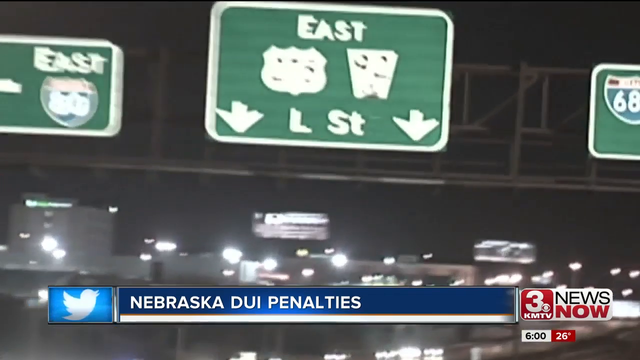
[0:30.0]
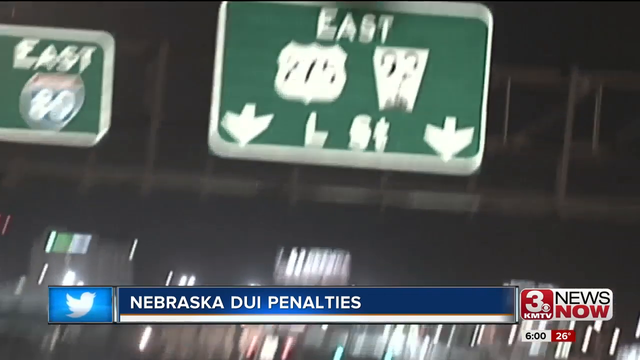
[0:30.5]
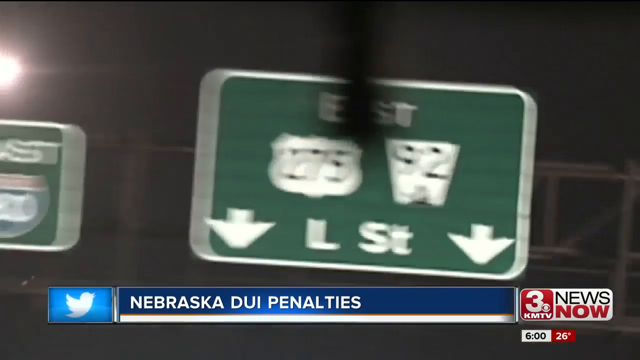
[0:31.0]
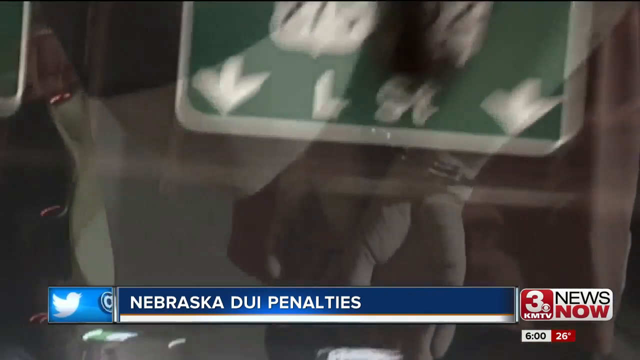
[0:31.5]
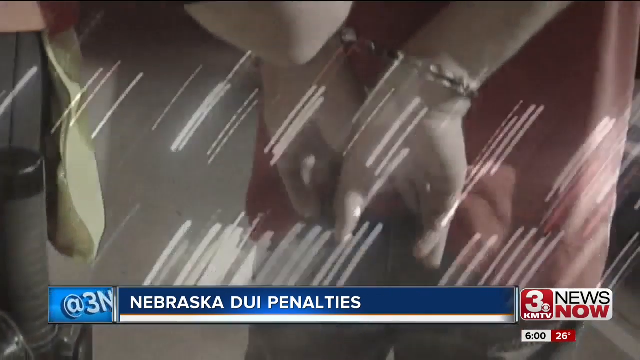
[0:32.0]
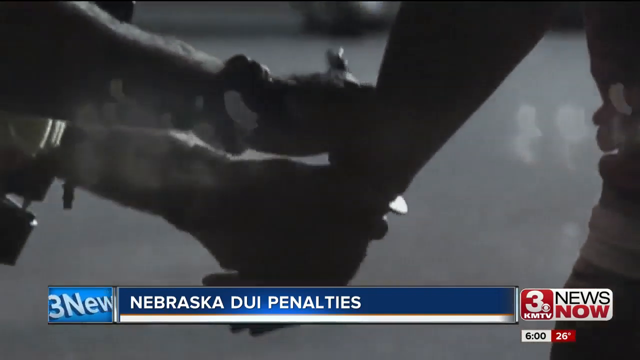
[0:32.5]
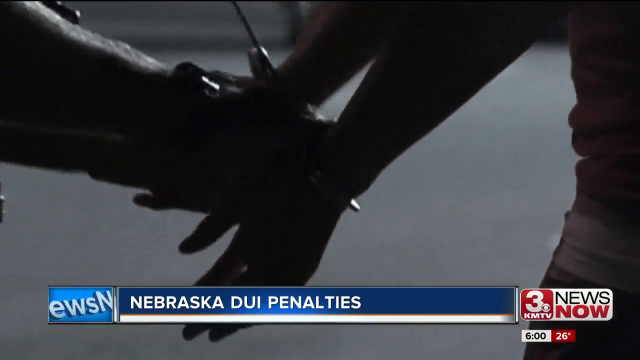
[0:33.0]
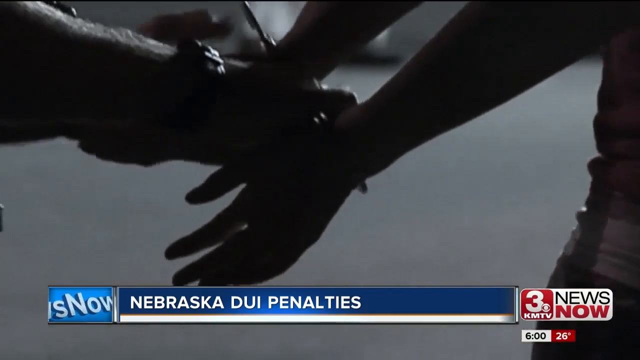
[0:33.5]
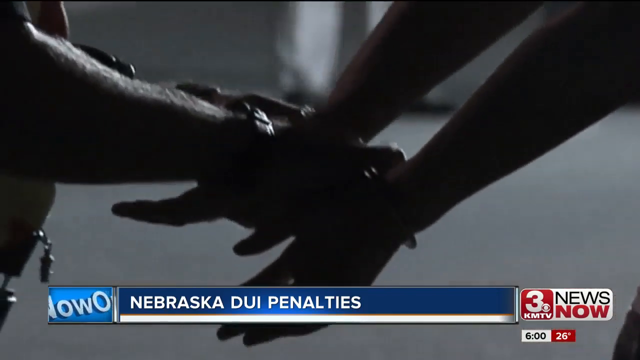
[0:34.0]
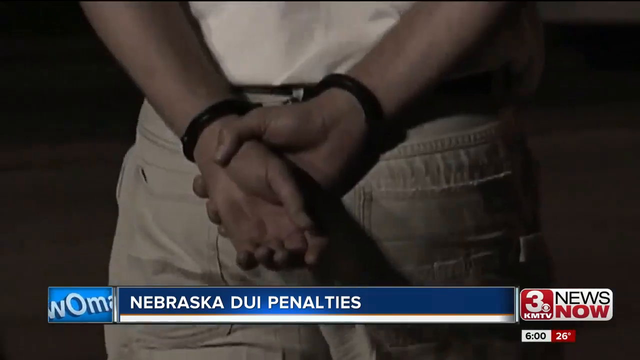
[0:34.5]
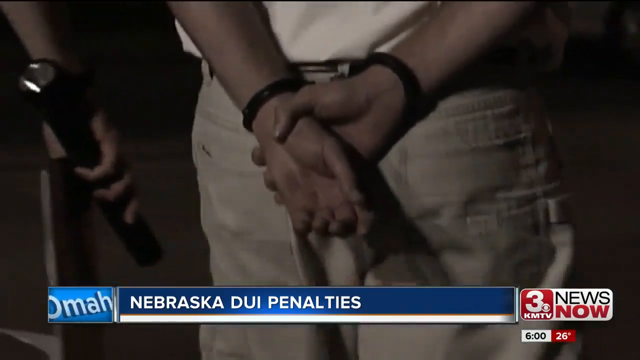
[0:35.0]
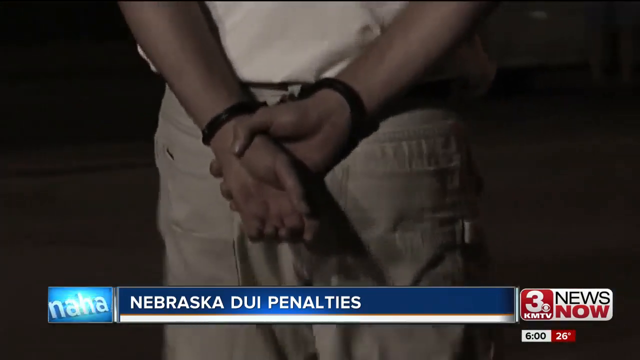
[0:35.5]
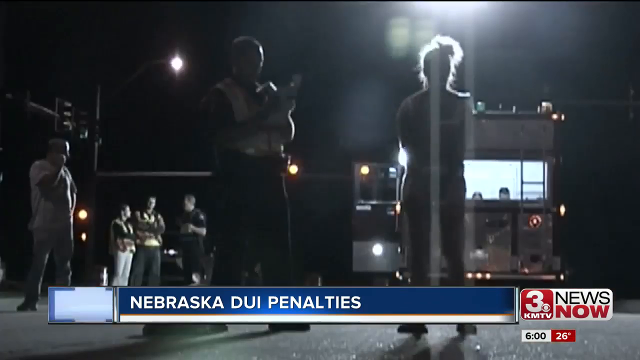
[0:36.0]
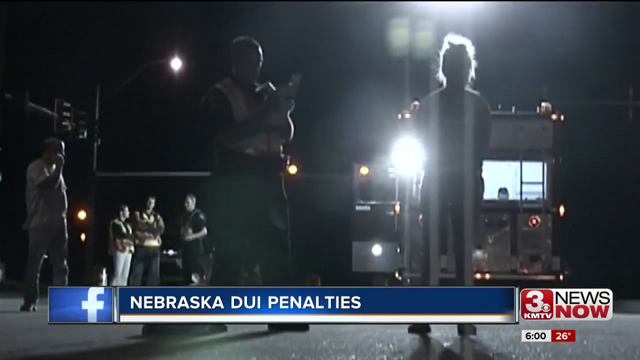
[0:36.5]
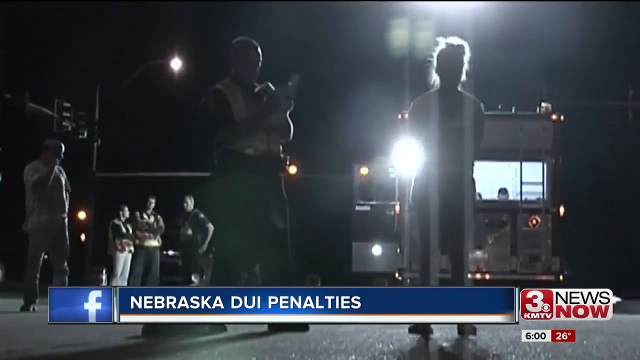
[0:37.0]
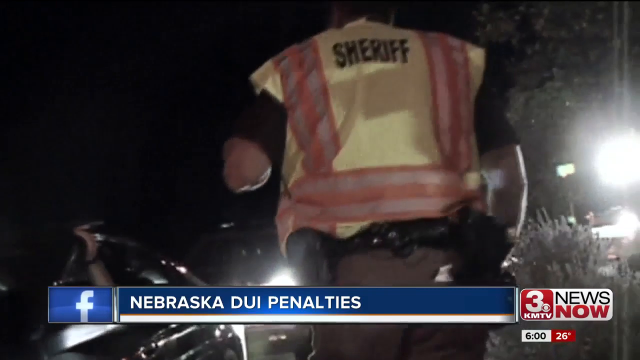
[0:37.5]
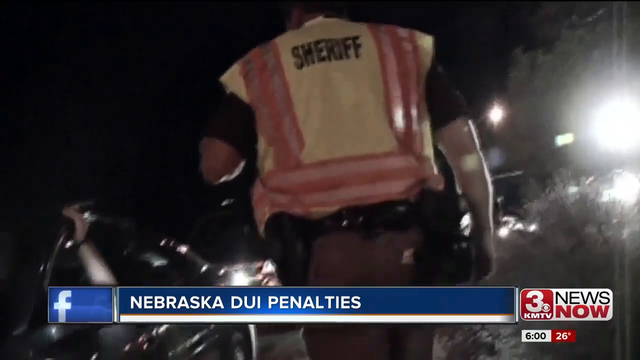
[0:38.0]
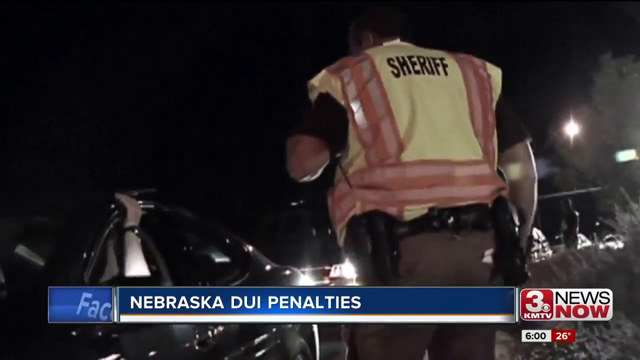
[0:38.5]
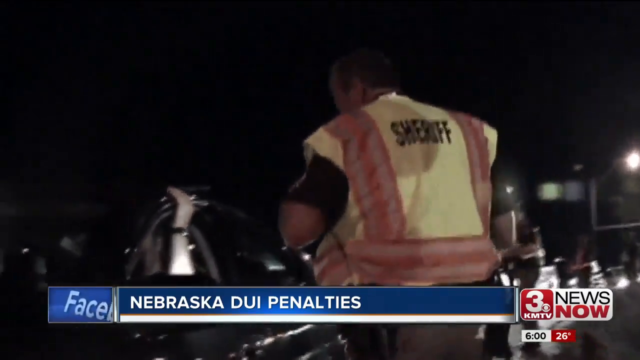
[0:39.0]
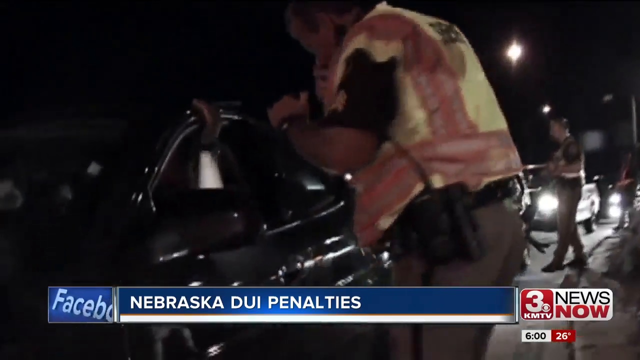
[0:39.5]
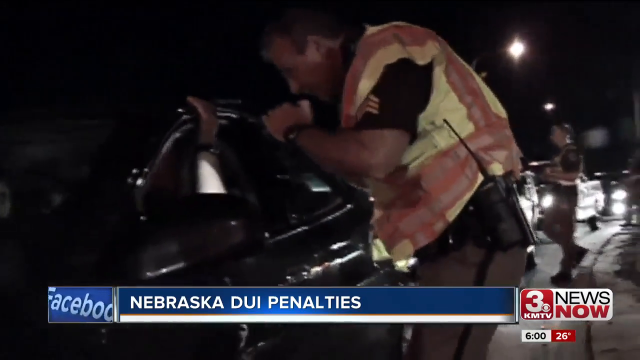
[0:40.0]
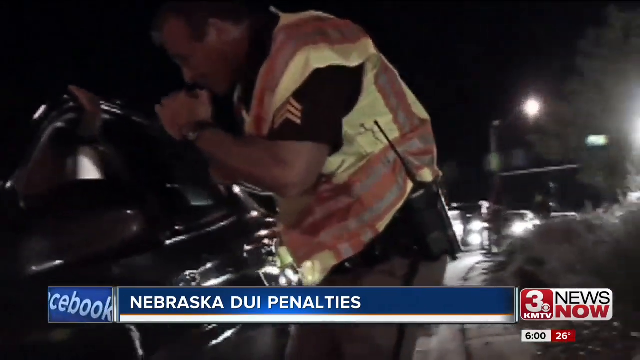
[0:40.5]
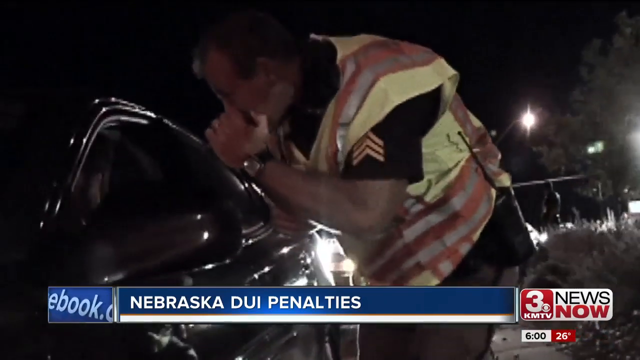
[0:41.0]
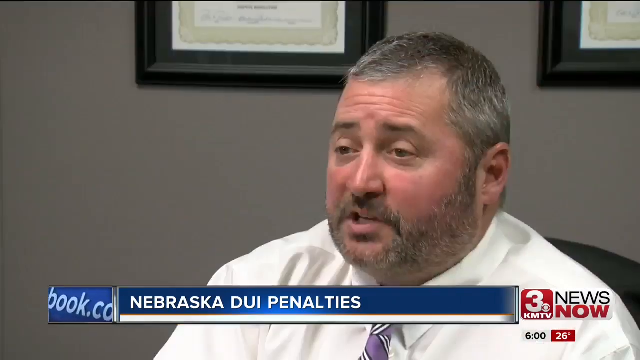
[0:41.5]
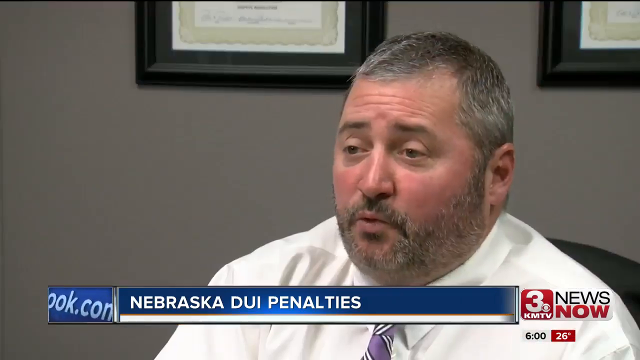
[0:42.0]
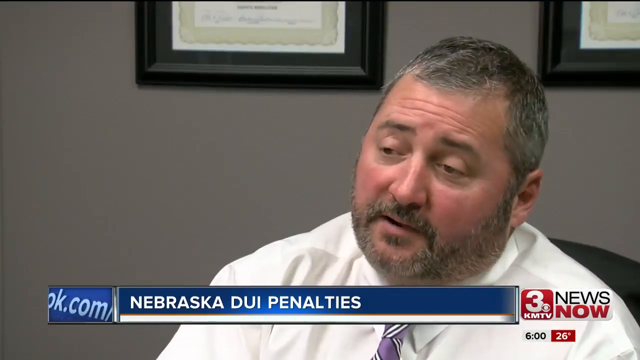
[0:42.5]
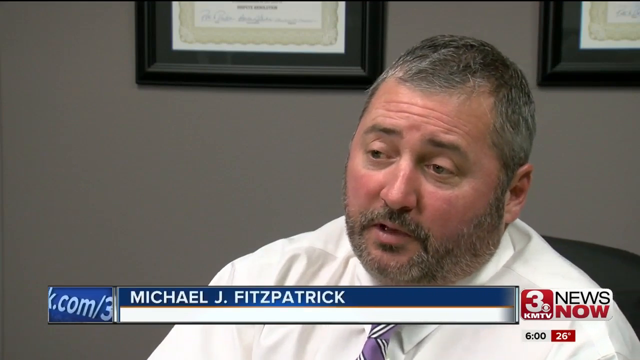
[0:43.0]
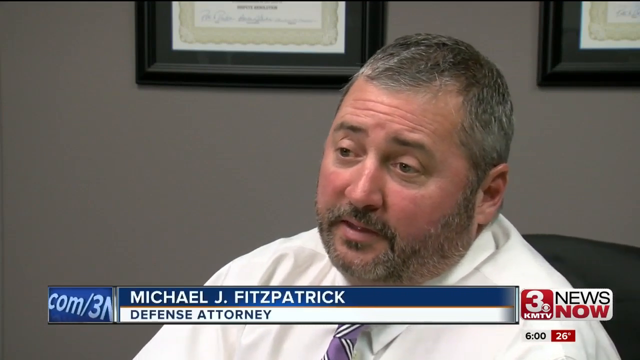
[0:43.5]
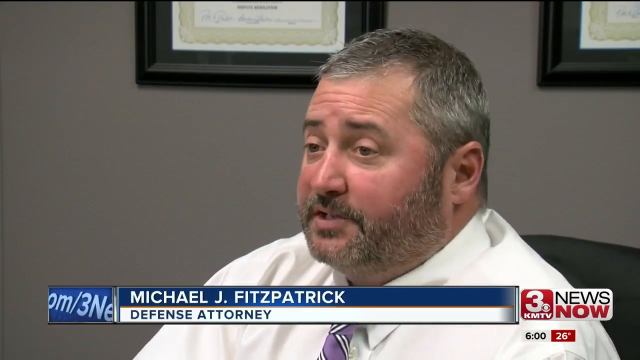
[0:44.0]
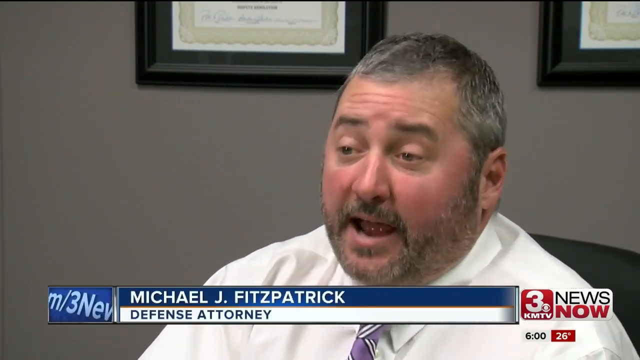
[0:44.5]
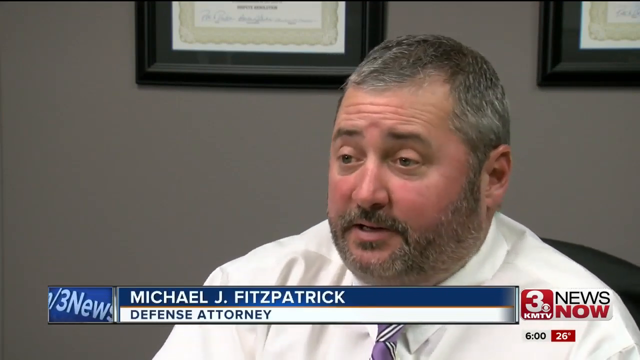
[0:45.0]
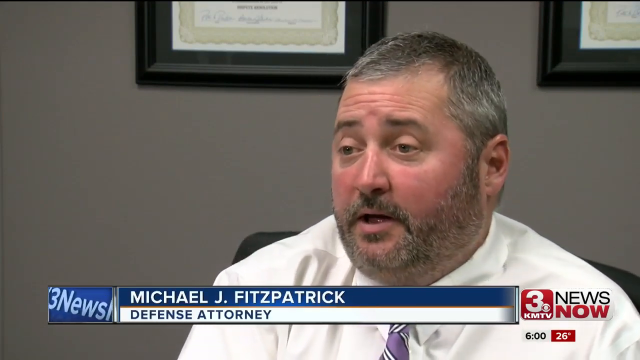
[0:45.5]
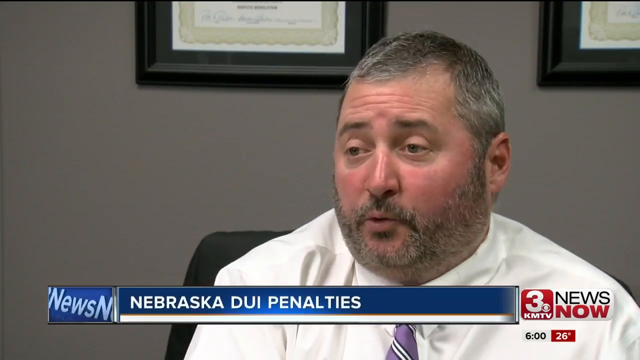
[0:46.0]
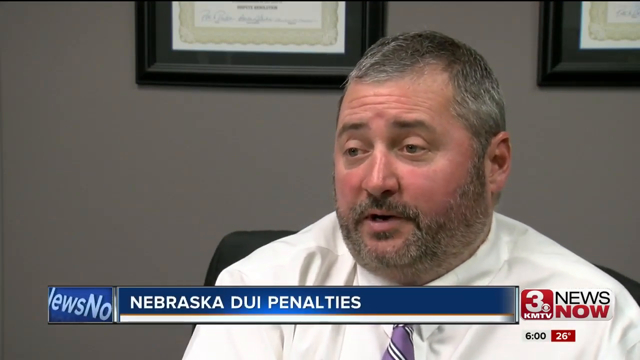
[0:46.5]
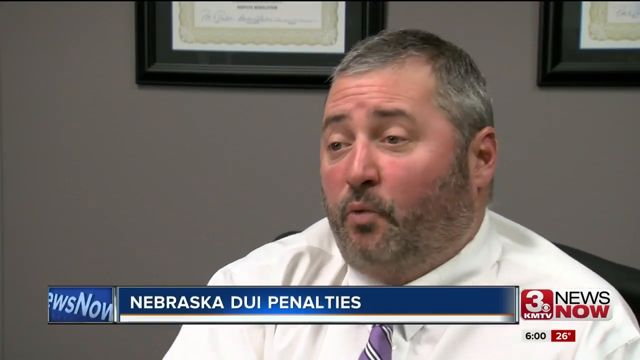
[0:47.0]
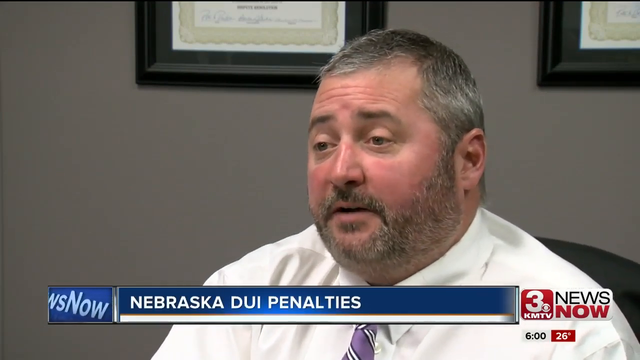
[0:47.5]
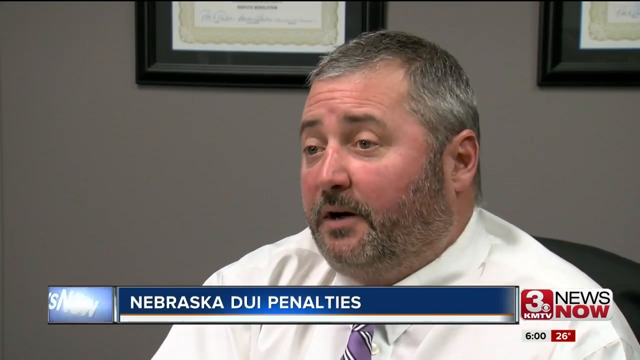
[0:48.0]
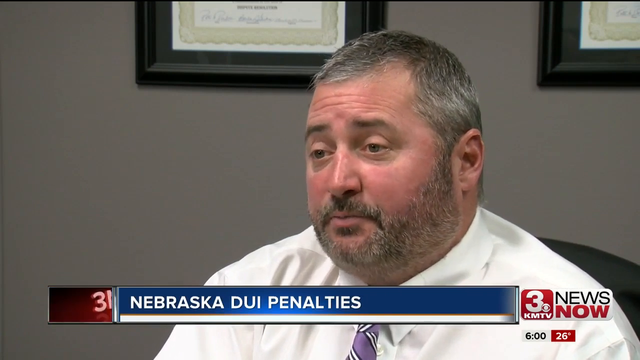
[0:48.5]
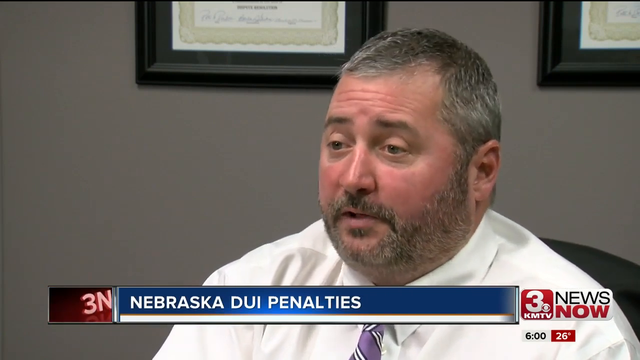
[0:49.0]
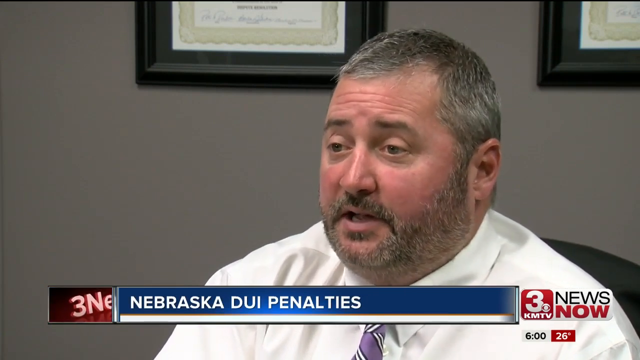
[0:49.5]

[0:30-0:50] The car passes under the "Eastwoods" signpost, and the report moves to what appears to be a stock image of police arresting someone. Handcuffs are being put on, and a key hangs from the policeman's belt. A close-up shows a man handcuffed with his hands behind his back; he wears a white t-shirt and beige chinos, and the handcuffs are black. A policeman briefly walks next to him. Next is a roadside at night, where apparently either an ambulance or a sort of Winnebago is pulled to the side of the road, and police officers and civilians are standing at the roadside. A sheriff's deputy in high-vis walks over to a car whose driver has his left arm resting on the windowsill and grips the top of the car with his left hand. The policeman has sergeant stripes on the left sleeve of his uniform. The report then goes to a man in an office with his qualification certificates behind him: defense attorney Michael Fitzpatrick. He appears to be in his forties, with short graying hair and a graying beard, and wears a white shirt and a purple, black and white striped tie. The walls of his office are gray.